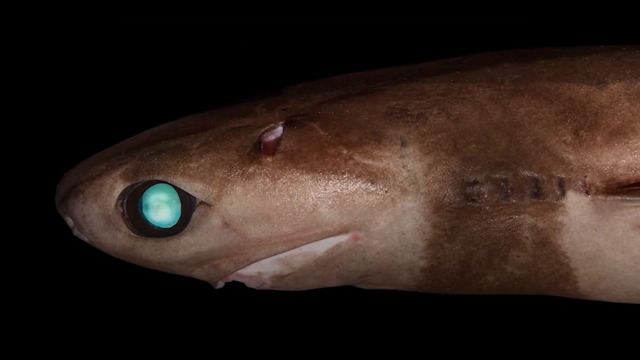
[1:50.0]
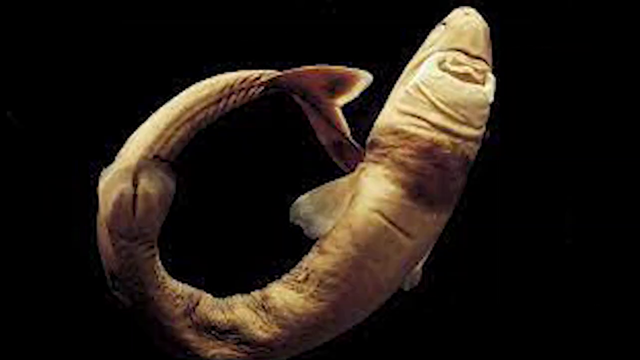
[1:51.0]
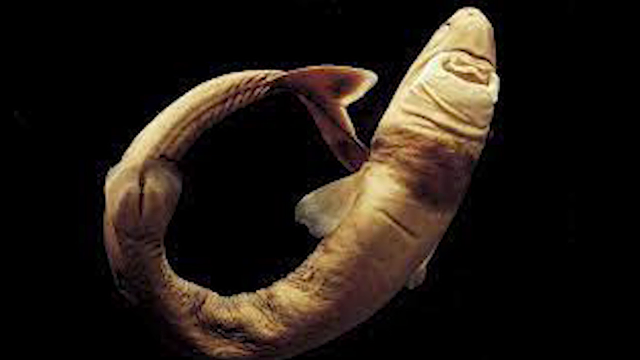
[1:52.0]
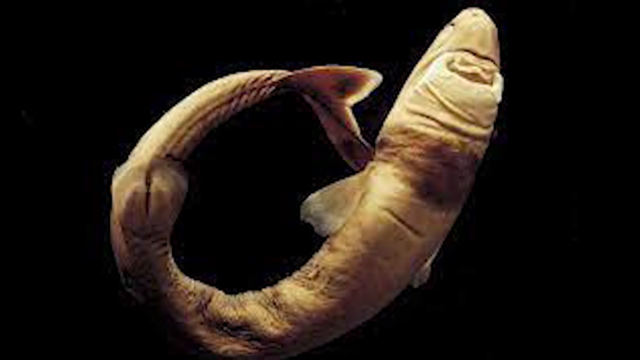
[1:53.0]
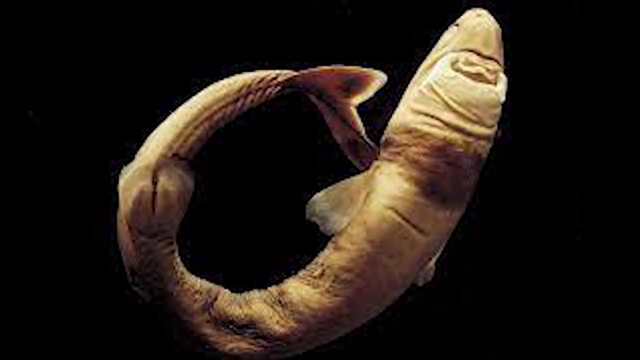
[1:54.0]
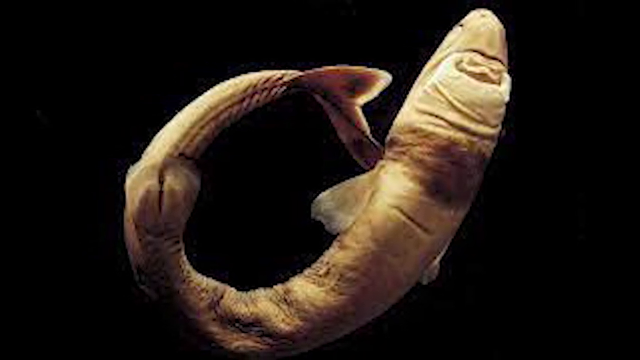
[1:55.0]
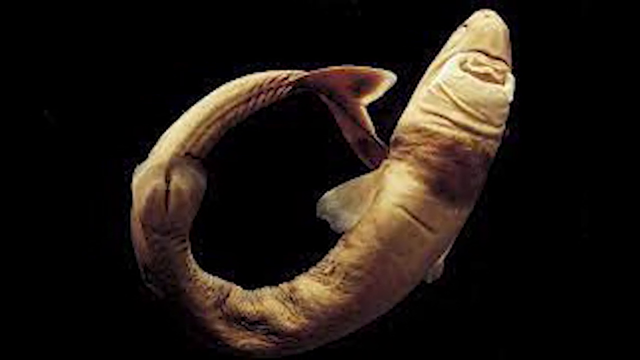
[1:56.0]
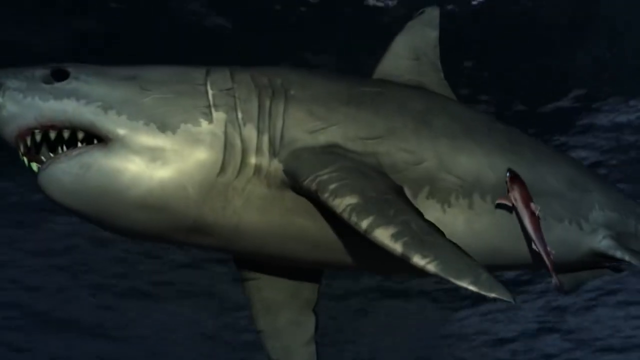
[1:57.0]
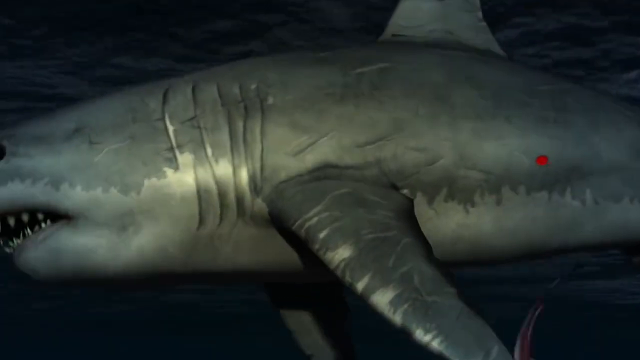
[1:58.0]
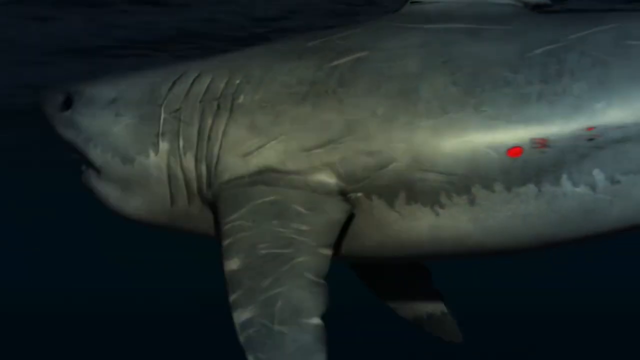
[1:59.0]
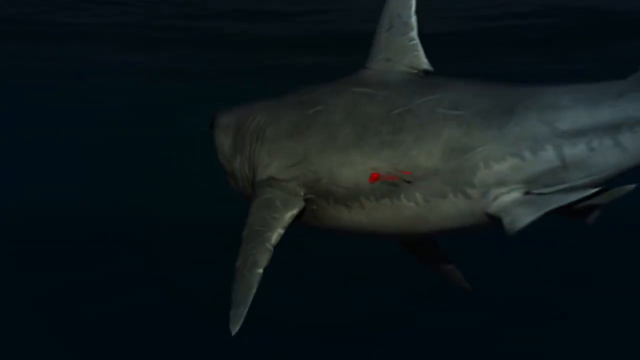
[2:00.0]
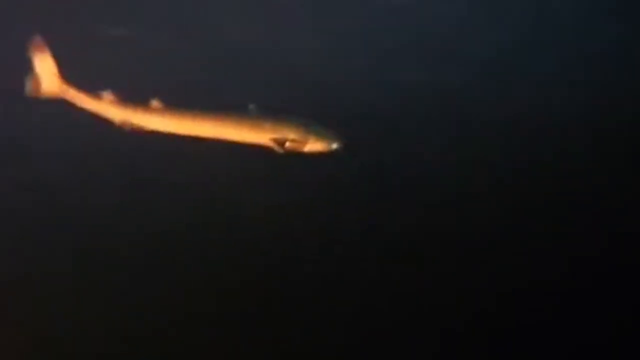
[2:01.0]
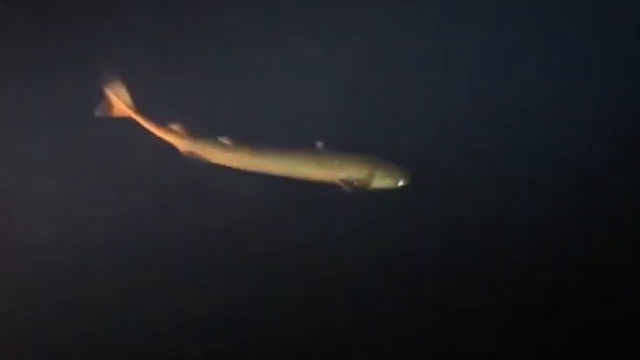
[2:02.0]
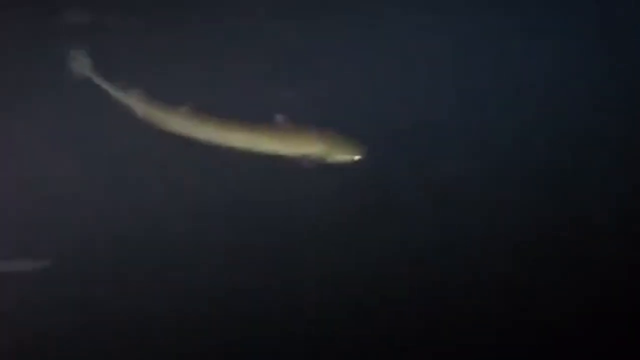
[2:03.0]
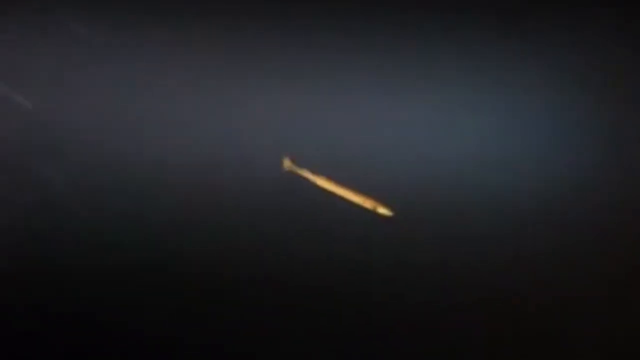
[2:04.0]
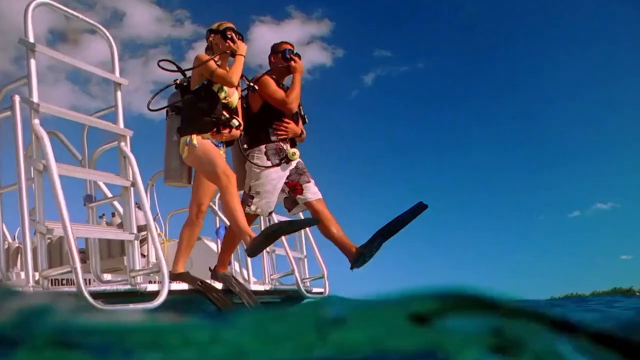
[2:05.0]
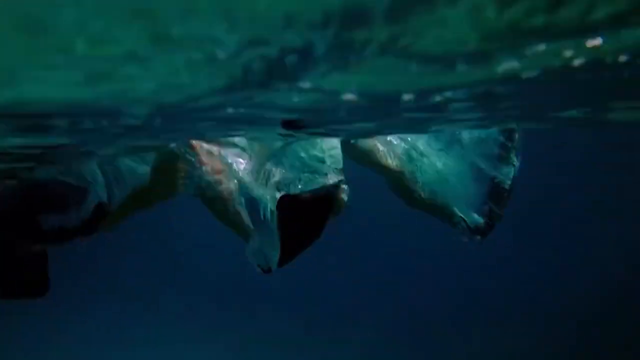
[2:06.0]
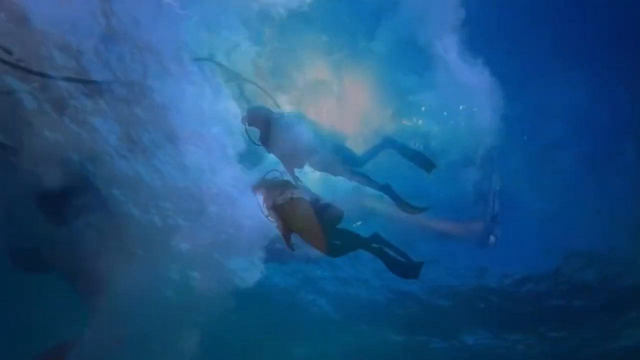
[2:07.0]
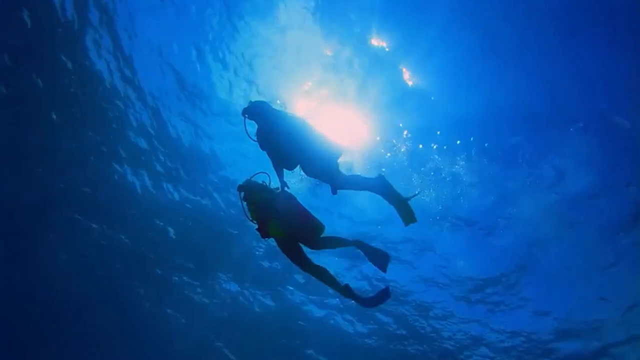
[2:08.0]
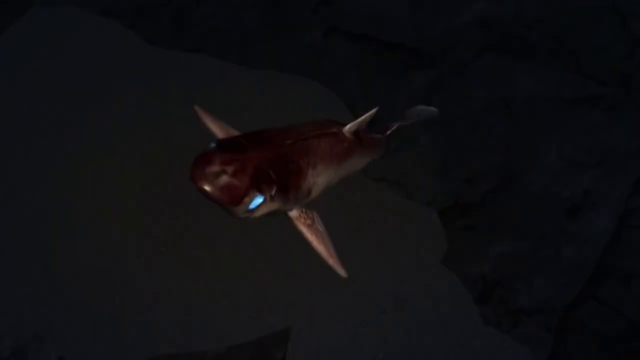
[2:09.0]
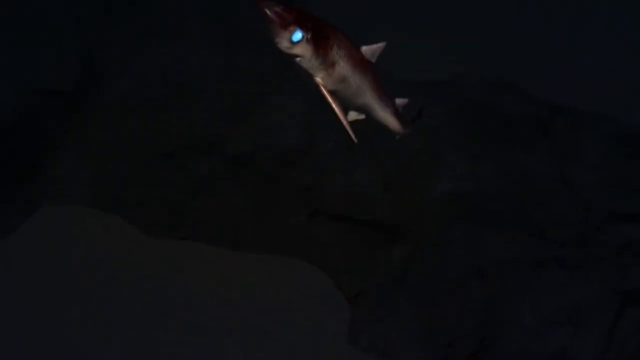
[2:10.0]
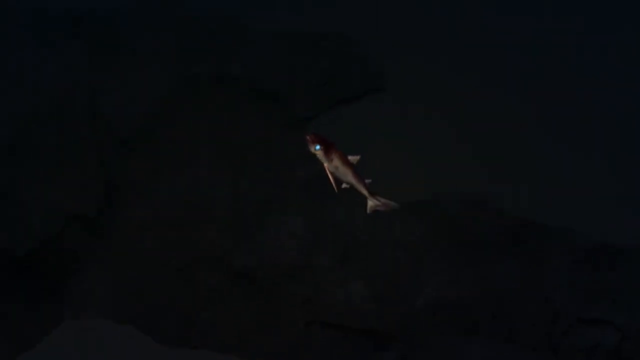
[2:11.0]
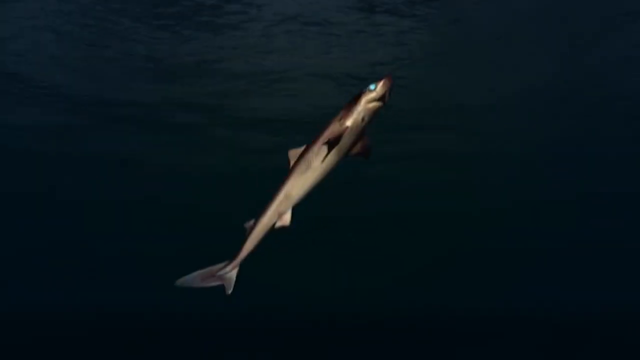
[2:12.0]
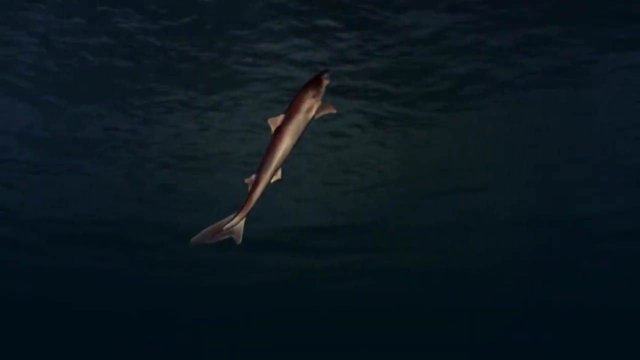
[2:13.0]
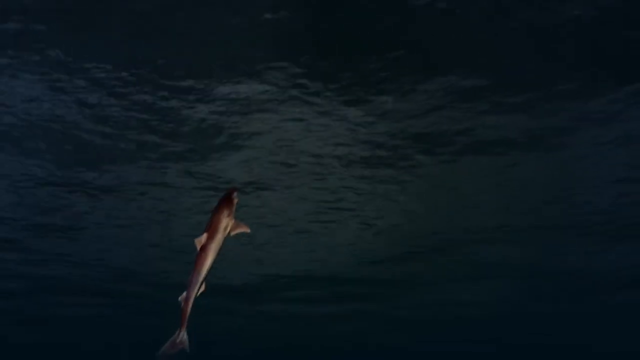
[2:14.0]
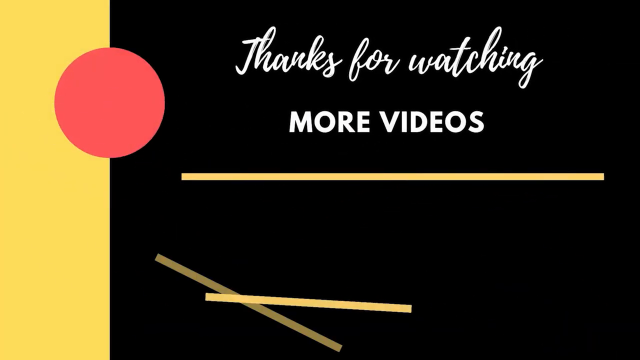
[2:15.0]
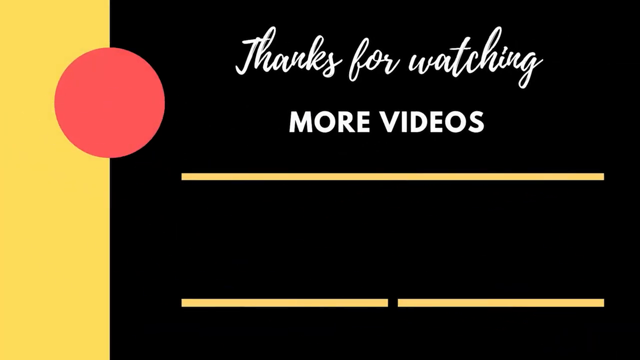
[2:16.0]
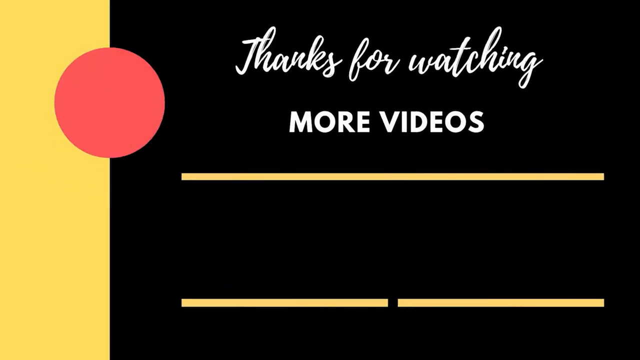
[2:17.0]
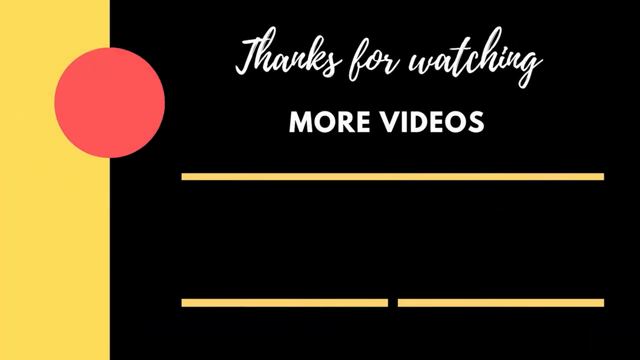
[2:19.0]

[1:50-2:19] More imaging of the outside layer is shown, along with the fish taking small bites out of sharks and other fish.